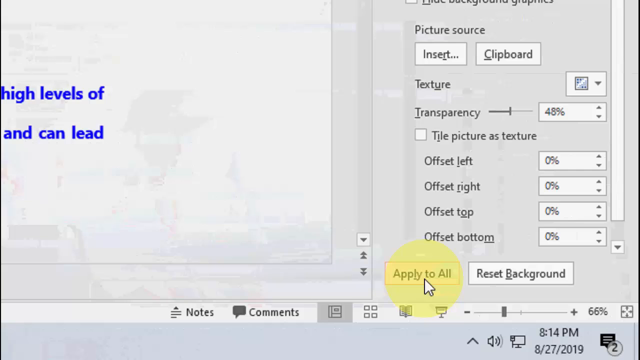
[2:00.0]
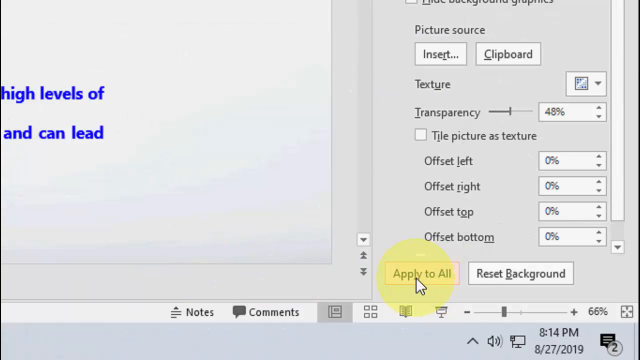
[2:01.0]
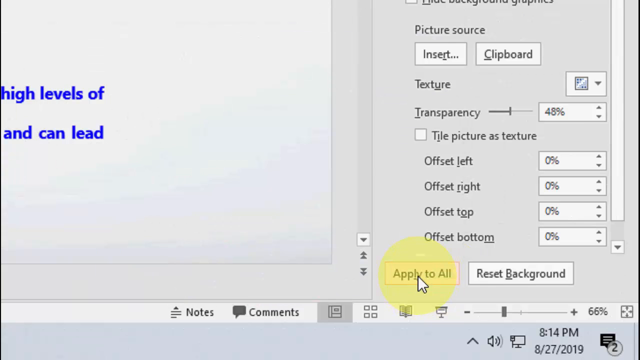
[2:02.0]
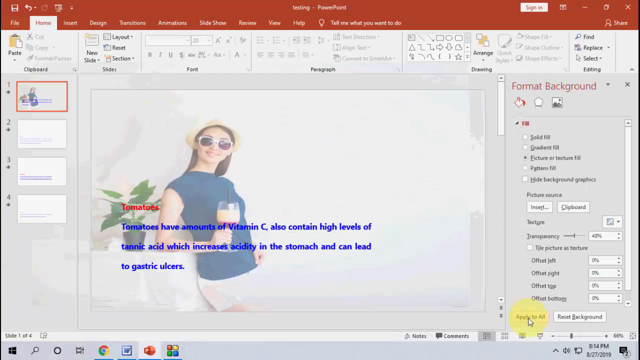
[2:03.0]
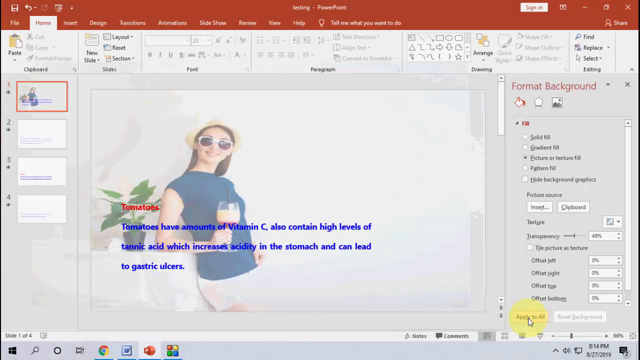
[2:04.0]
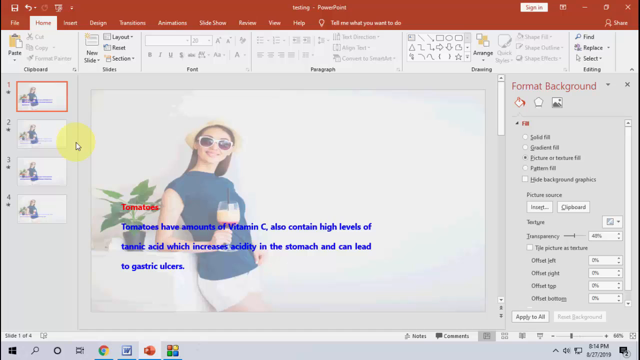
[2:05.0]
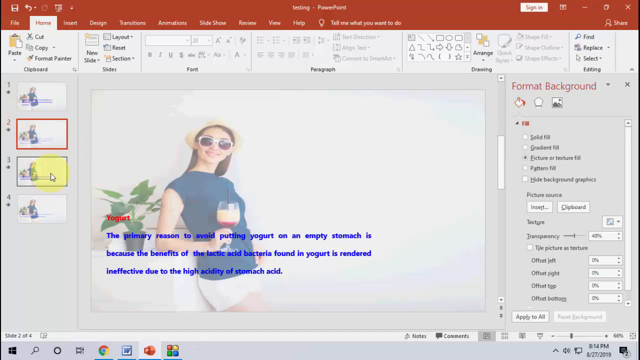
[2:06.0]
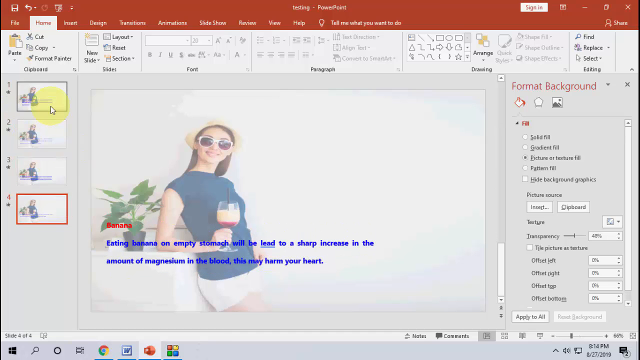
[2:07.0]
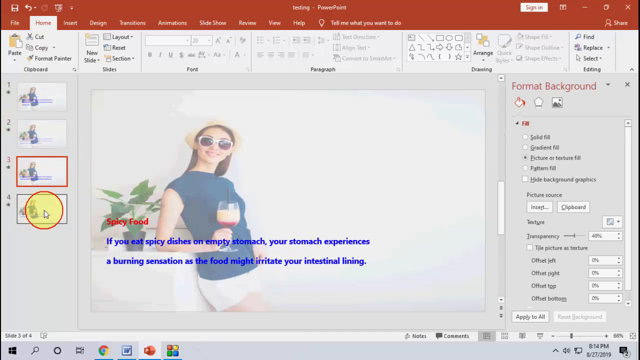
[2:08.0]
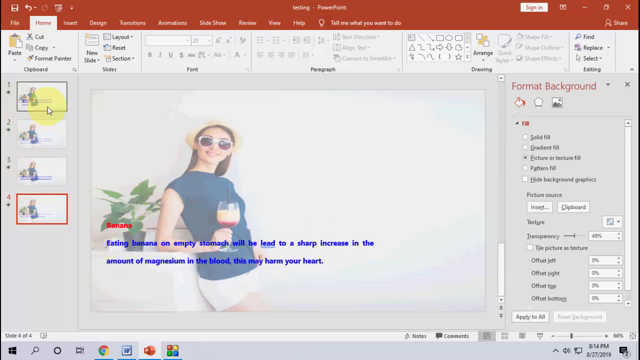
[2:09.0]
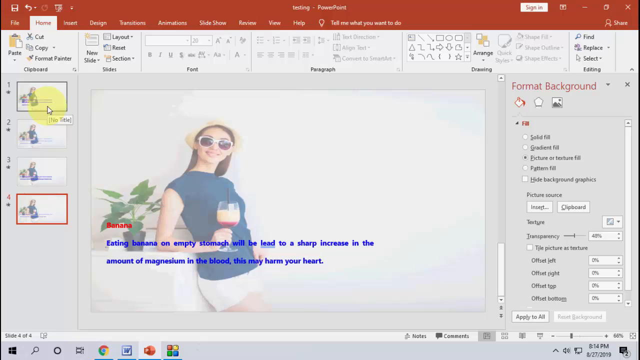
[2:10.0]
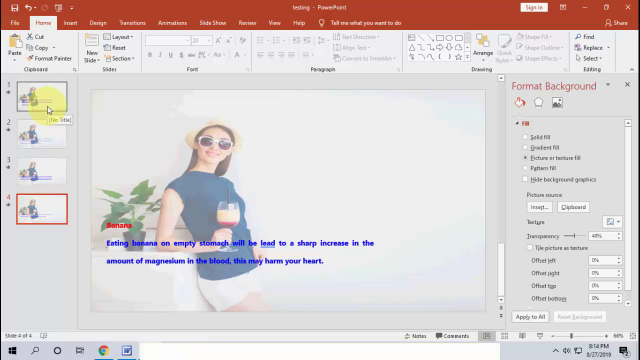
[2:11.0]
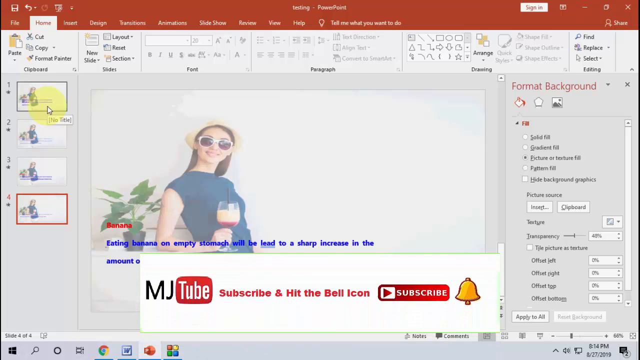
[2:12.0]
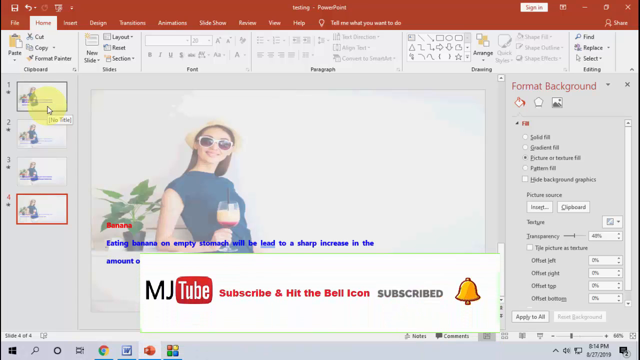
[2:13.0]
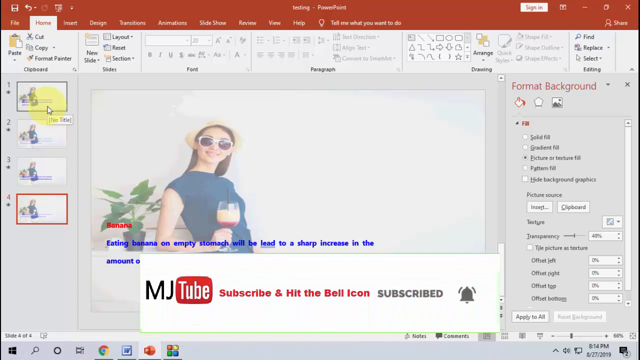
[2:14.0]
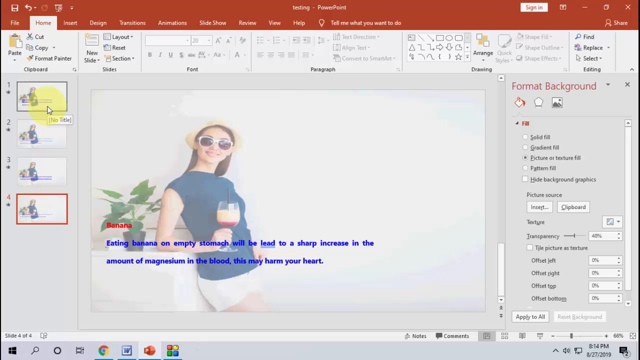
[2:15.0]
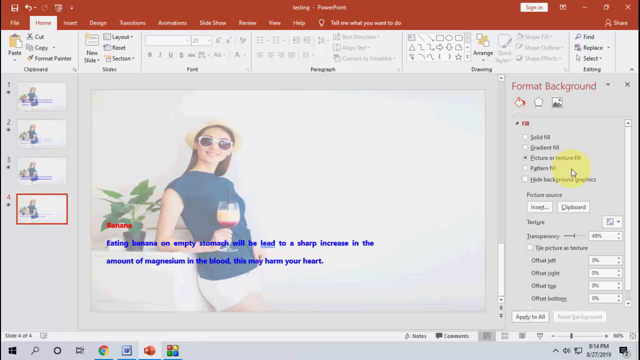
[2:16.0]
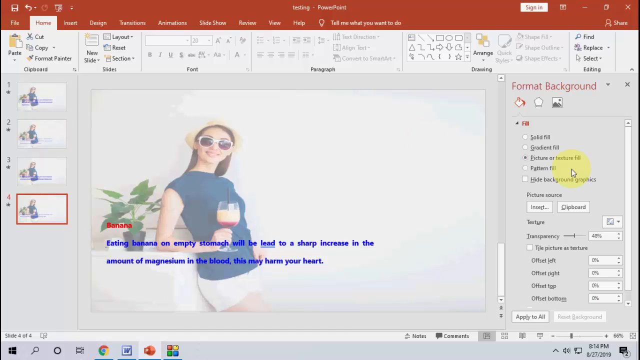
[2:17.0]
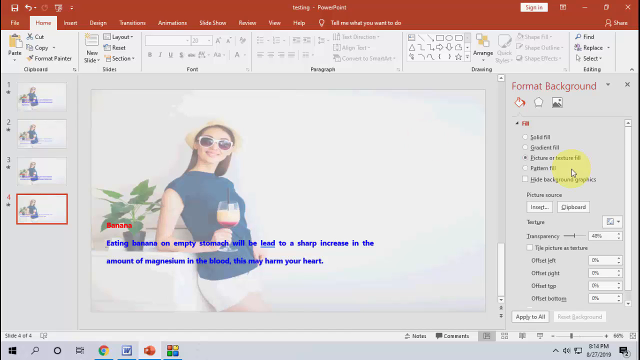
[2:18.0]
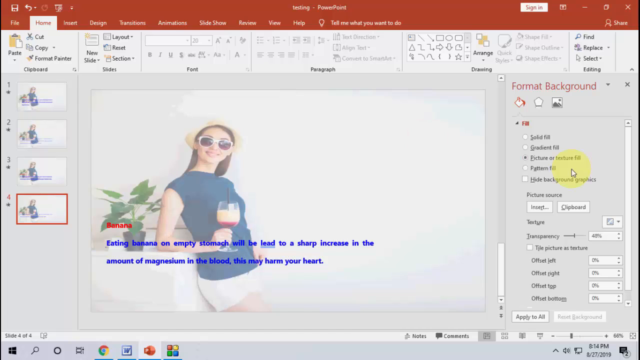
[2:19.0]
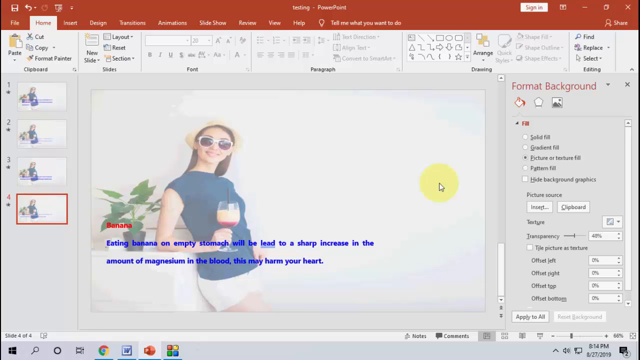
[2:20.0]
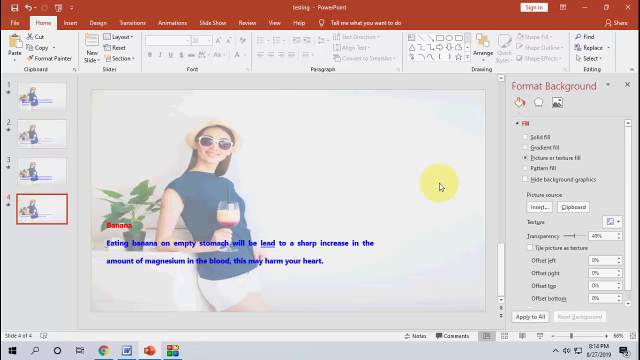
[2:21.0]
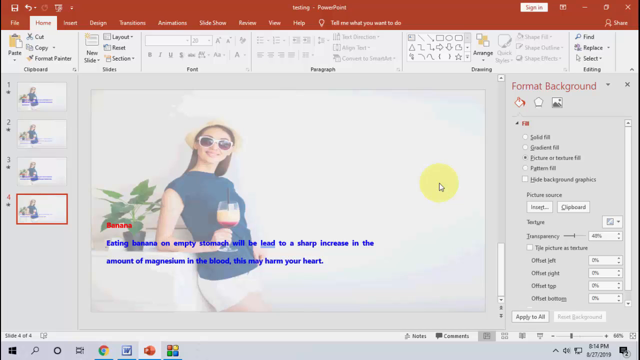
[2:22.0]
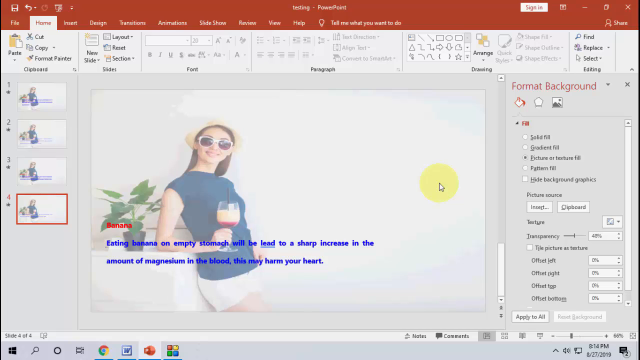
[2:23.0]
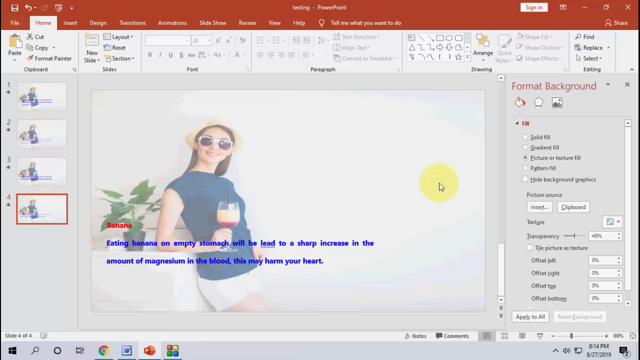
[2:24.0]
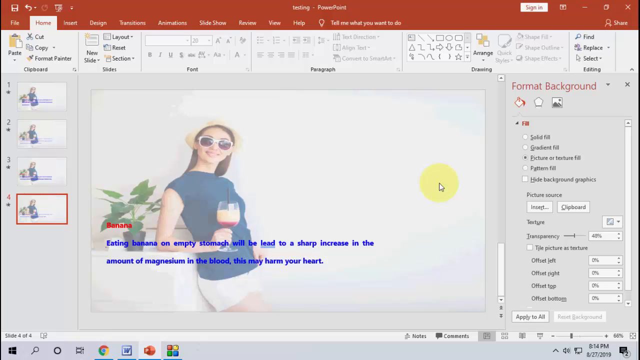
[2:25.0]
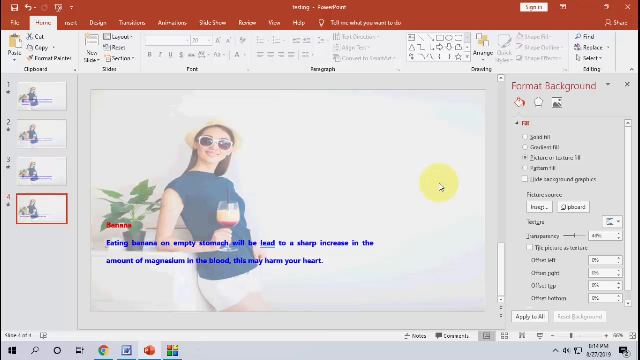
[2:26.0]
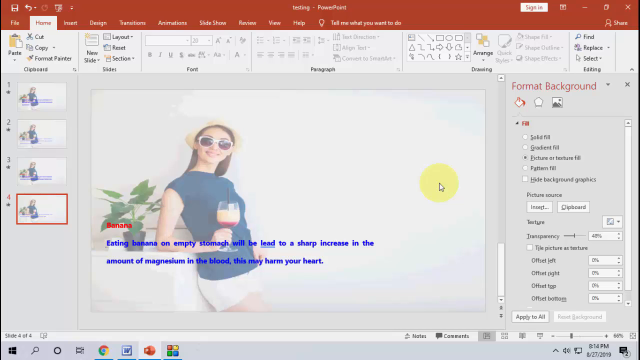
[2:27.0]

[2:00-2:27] The cursor hovers over the apply to all button, with a reset background button also on the right, and apply to all is clicked. On the left side of the screen the same picture appears on all four slides. The cursor clicks on each slide, and each one shows the same picture while the text changes. The last slide says "banana" in red text with blue text underneath reading "eating banana on empty stomach will lead to a sharp increase in the amount of magnesium in the blood this may harm your heart". In the background is a kind of faded, semi-transparent photograph of a woman smiling and looking at the camera, wearing short white shorts and a sleeveless blue shirt. The PowerPoint title is at the top of the page along with tools such as home, insert and design, and a couple of white scroll bars are on the right side. At the end of the video a small notification pops up saying "MJTube subscribe and hit the bell icon".